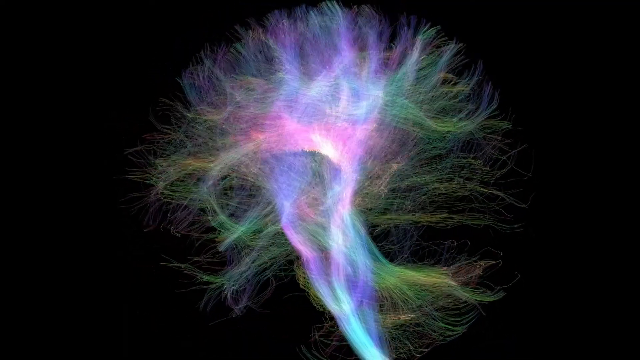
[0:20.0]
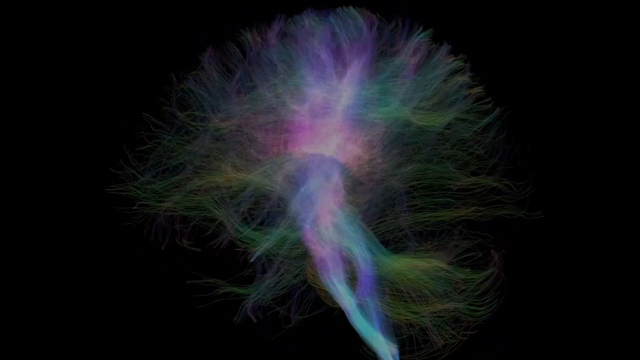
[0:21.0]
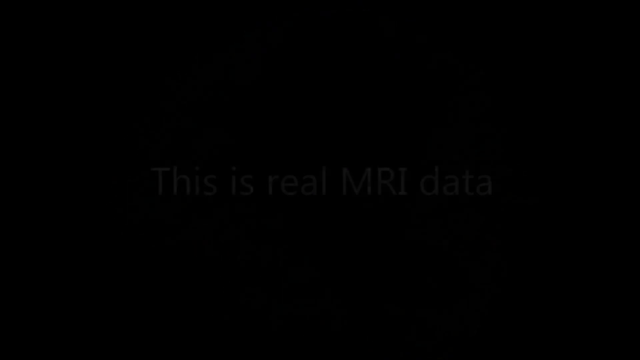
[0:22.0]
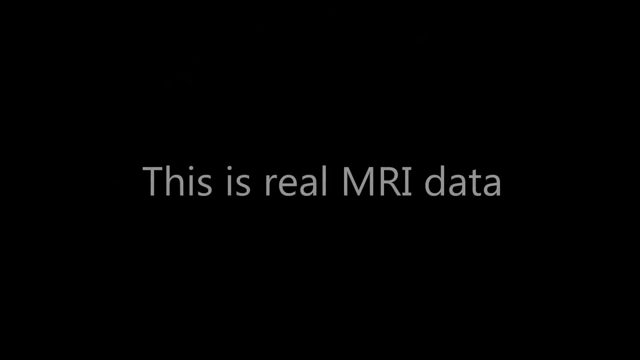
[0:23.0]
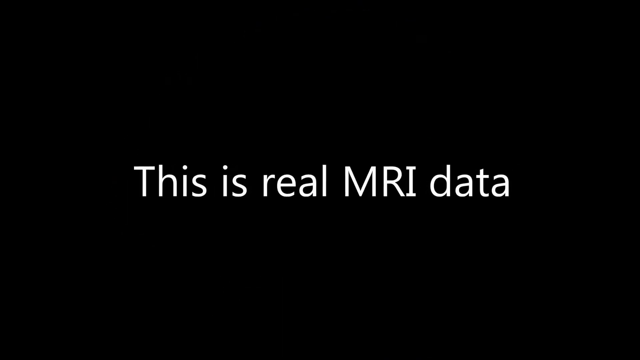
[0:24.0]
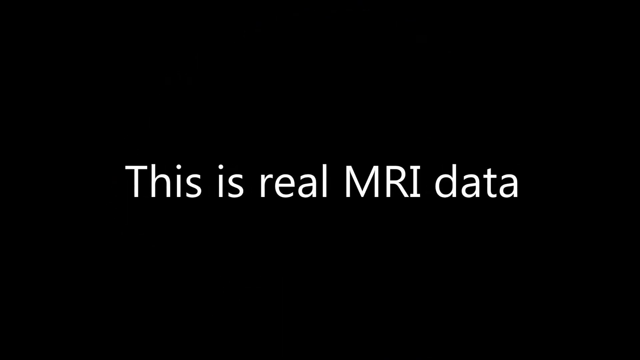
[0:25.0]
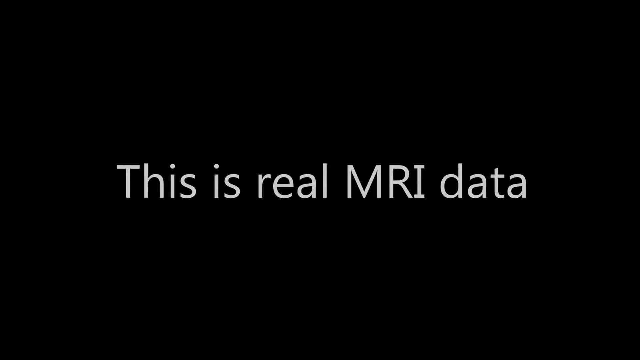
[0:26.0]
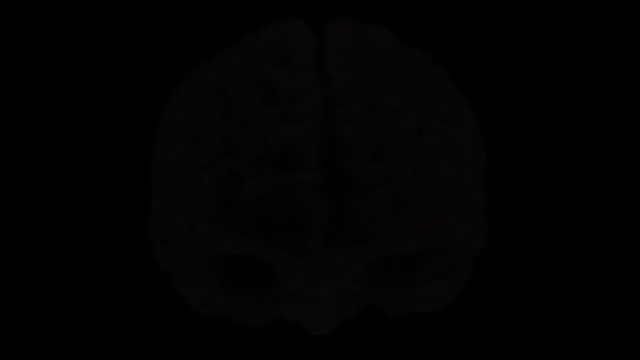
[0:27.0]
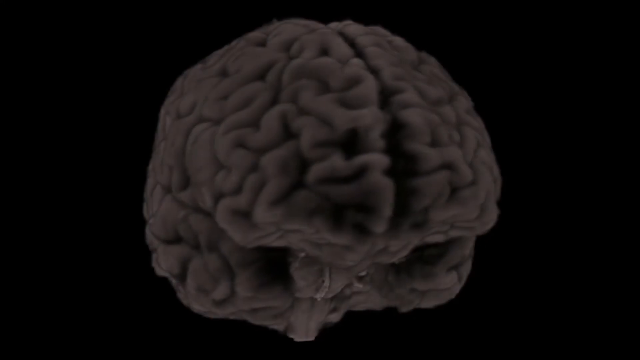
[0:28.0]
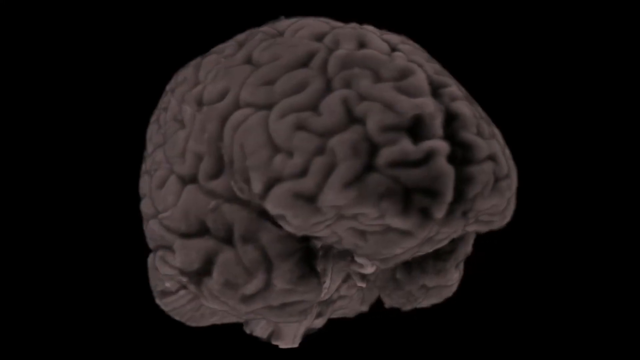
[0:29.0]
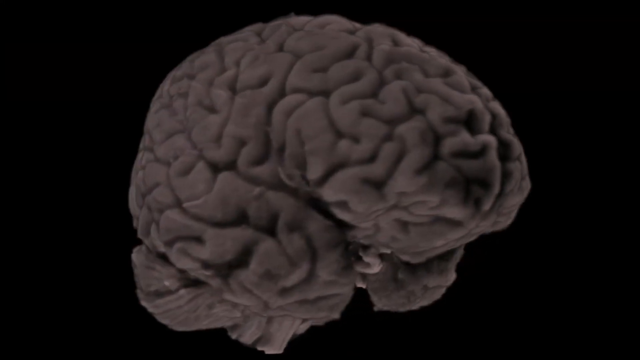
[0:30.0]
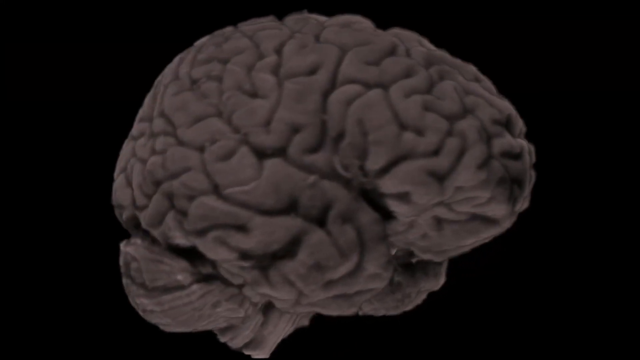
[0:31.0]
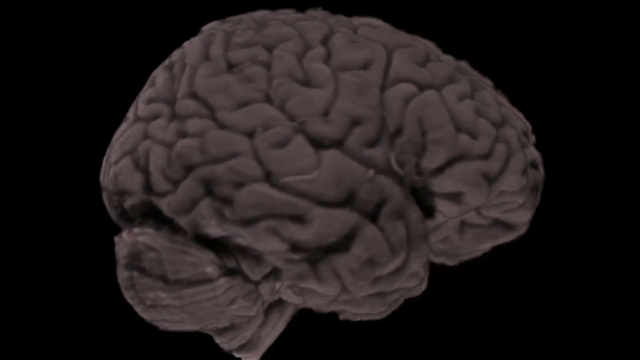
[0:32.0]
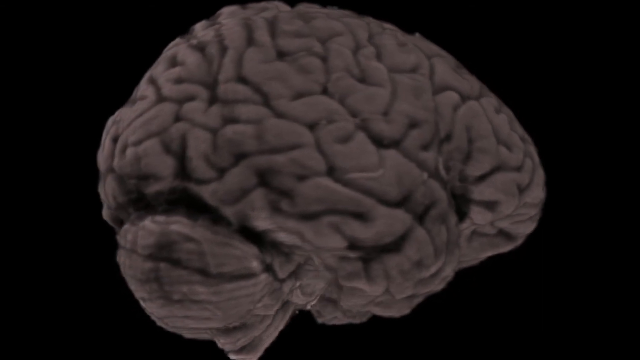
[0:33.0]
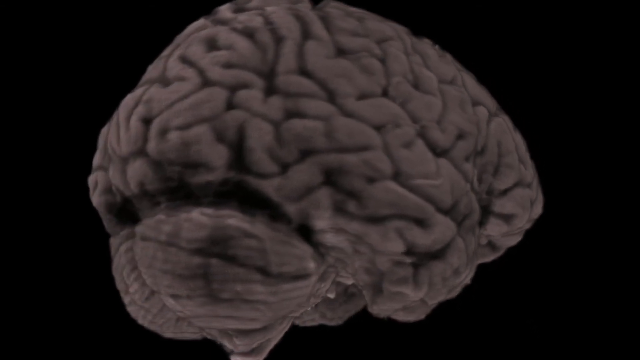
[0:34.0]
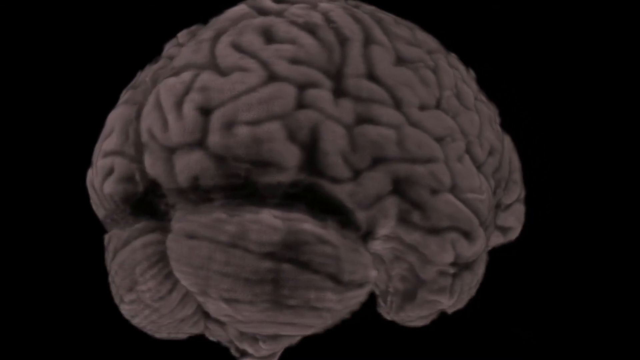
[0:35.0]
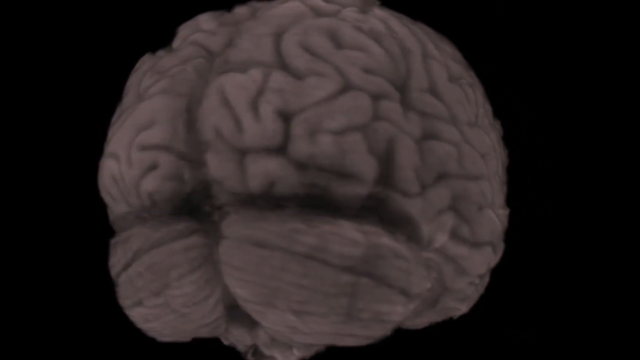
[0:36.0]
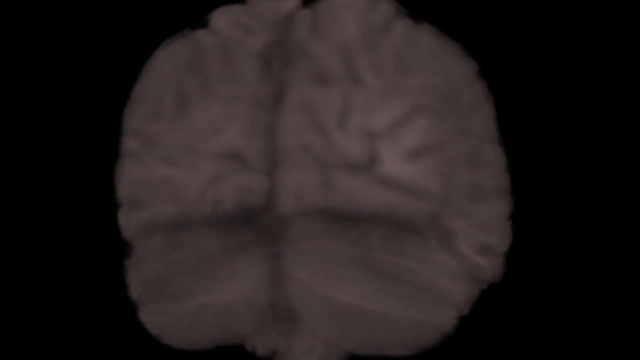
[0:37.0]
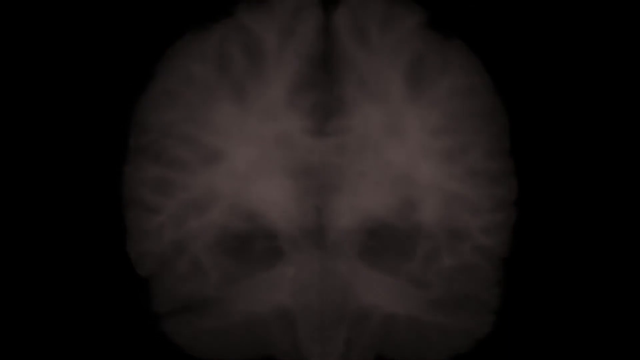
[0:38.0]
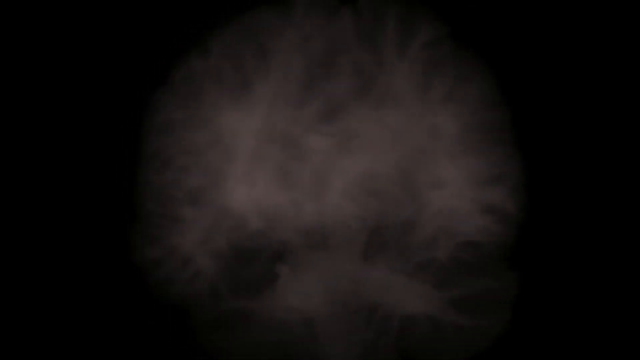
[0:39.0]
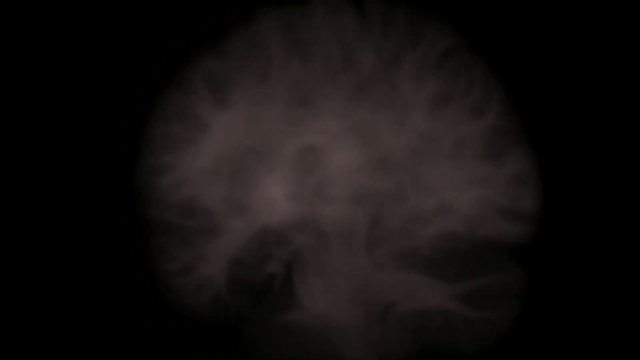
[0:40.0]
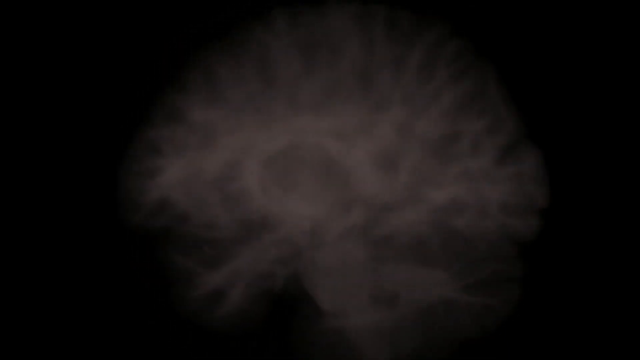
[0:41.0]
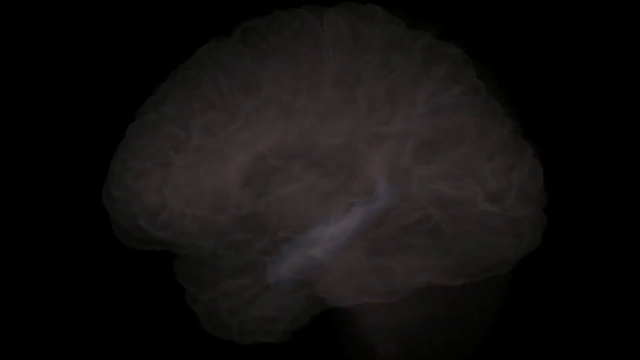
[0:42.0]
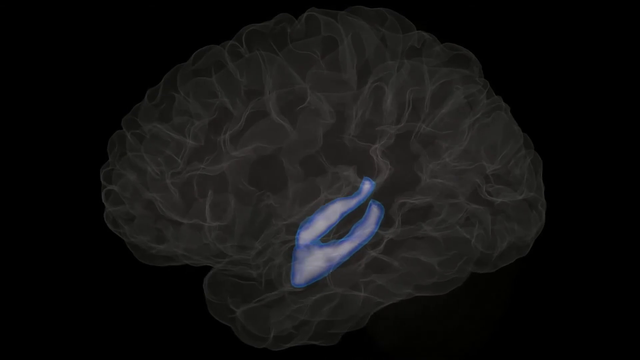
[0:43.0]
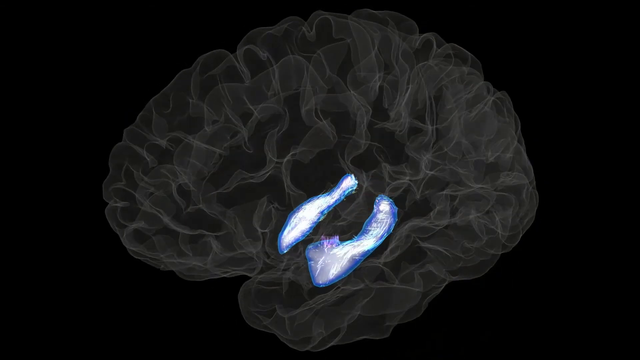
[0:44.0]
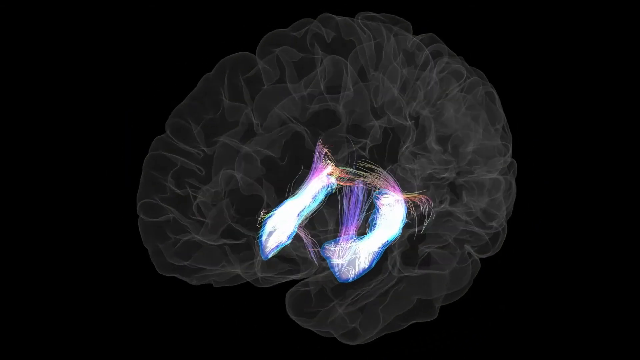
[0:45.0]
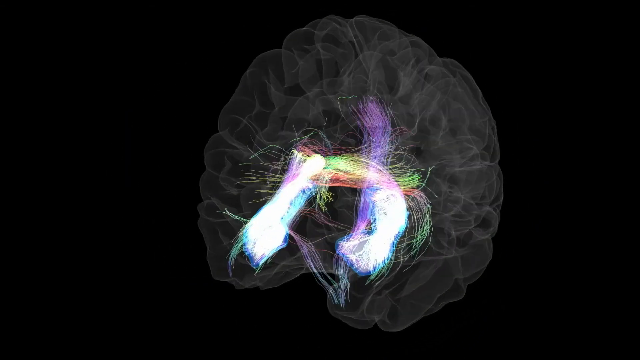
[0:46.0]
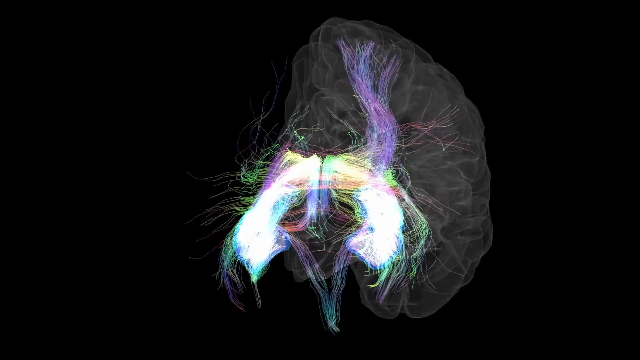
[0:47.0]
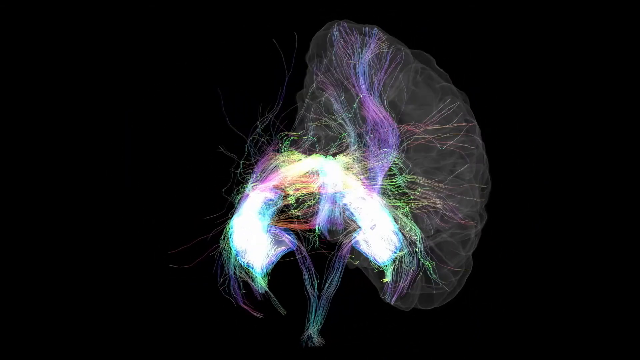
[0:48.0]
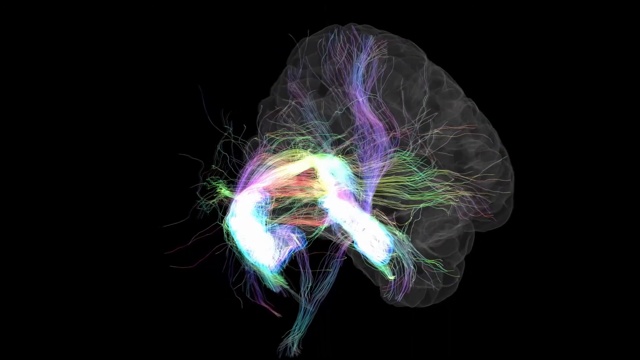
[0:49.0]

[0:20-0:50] The structure made of tendrils continues to rotate clockwise against a black background before fading into darkness. Large white text fades in at the center of the screen, reading 'This is real MRI data'. The text grows larger and then fades back to black. Next comes what appears to be a computer model created from a scan of a human brain. The 3D exterior of the brain is first seen almost front on, then it rotates away anti-clockwise, revealing the right-hand side and then the rear of the brain. As the view moves round to the back, the texture of the image changes and becomes fuzzier until what appear to be slices of the brain are visible, followed by the earlier tendril image rendered in a brownish monotone. A transparent computer rendering of the brain's exterior then appears, with the colored tendrils forming up and through inside it to create the structure shown earlier.